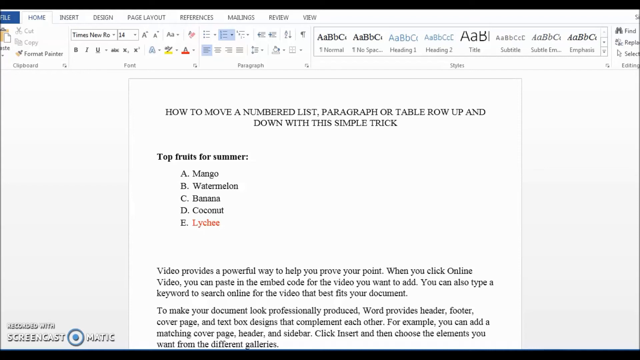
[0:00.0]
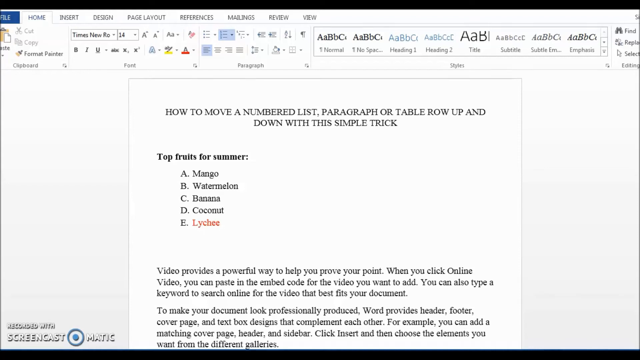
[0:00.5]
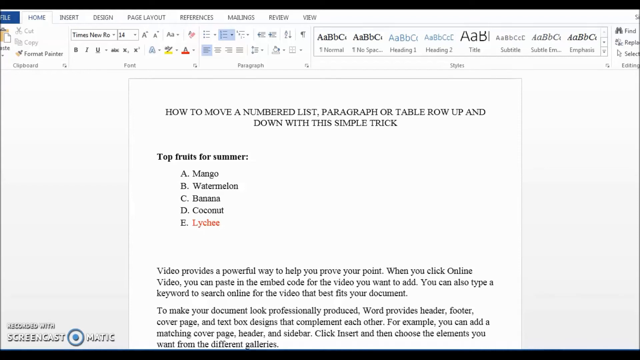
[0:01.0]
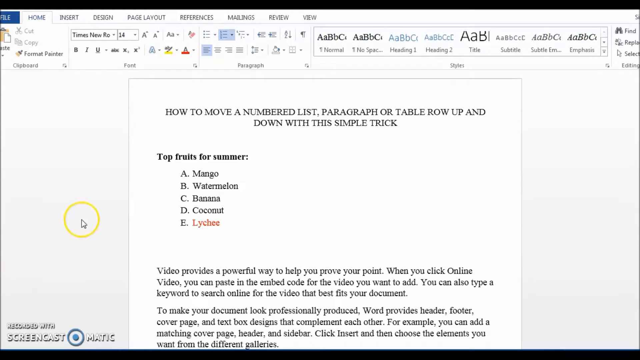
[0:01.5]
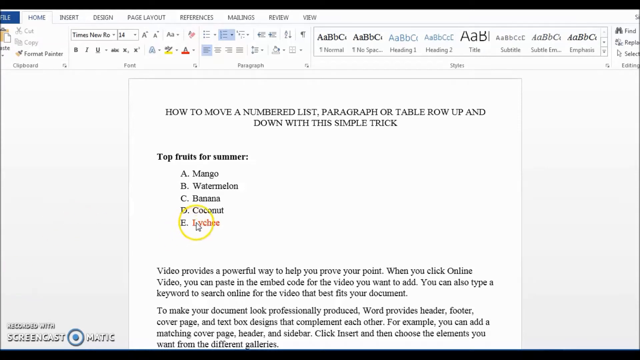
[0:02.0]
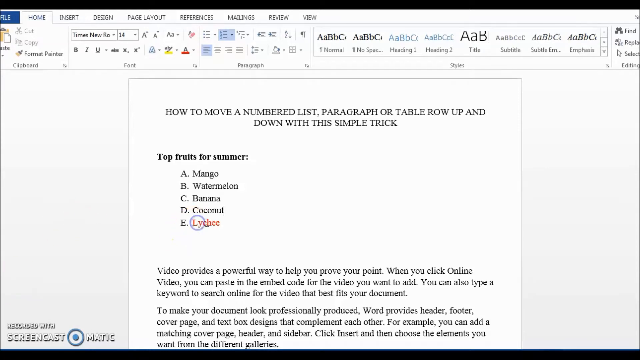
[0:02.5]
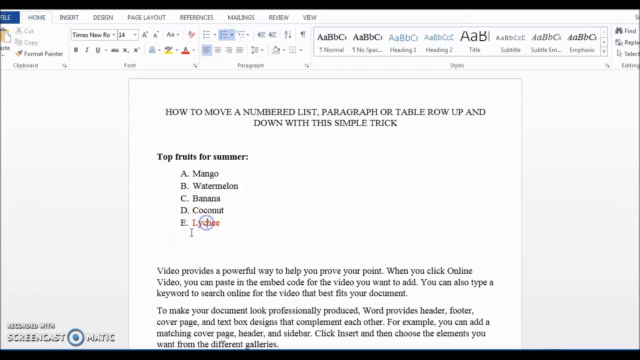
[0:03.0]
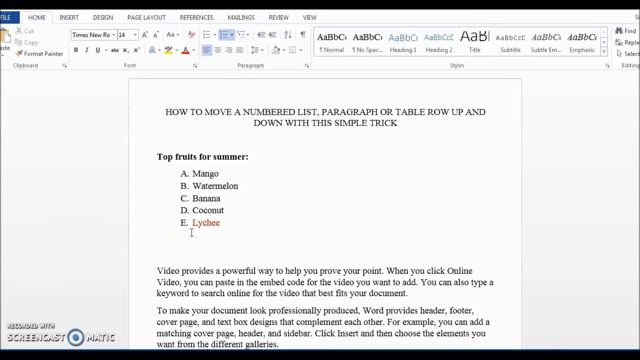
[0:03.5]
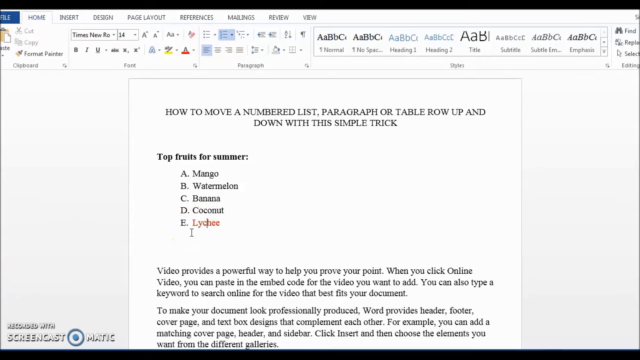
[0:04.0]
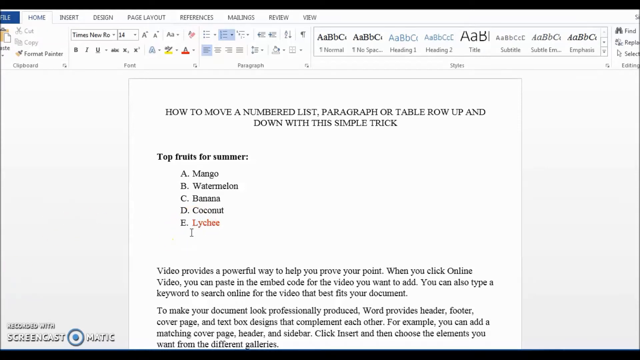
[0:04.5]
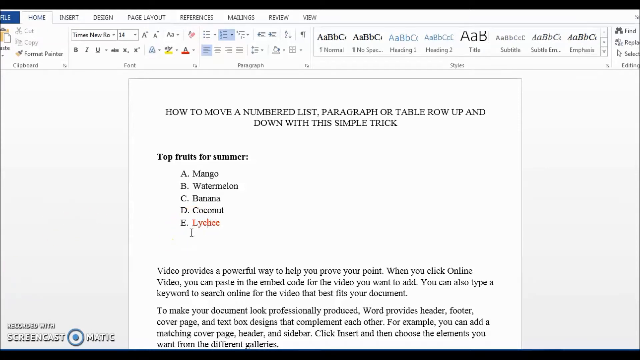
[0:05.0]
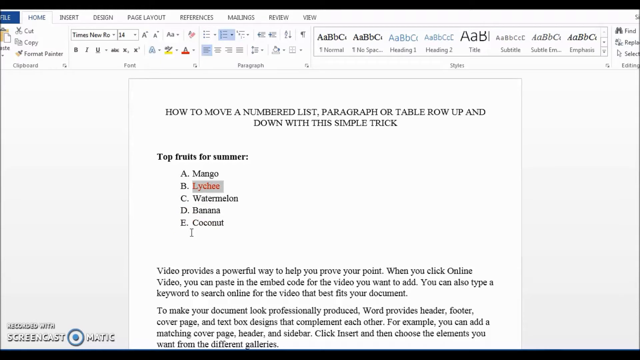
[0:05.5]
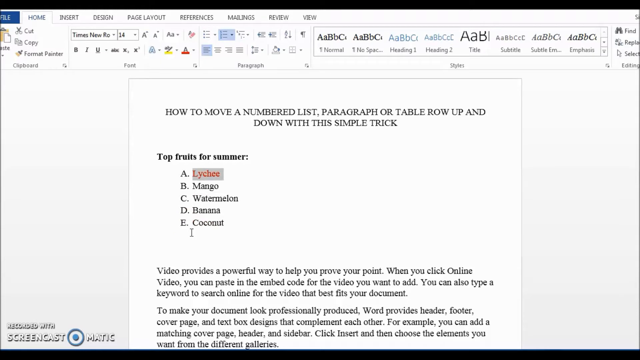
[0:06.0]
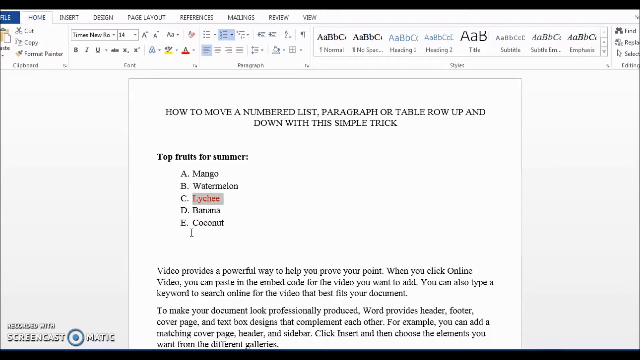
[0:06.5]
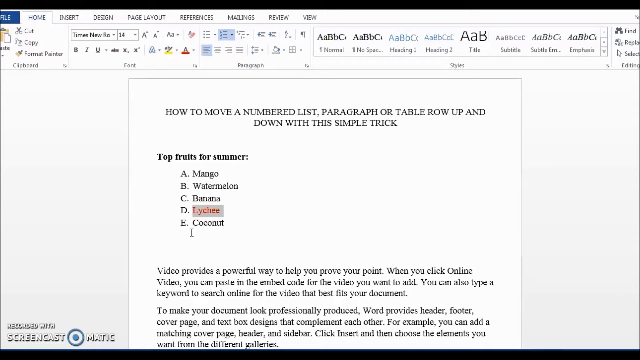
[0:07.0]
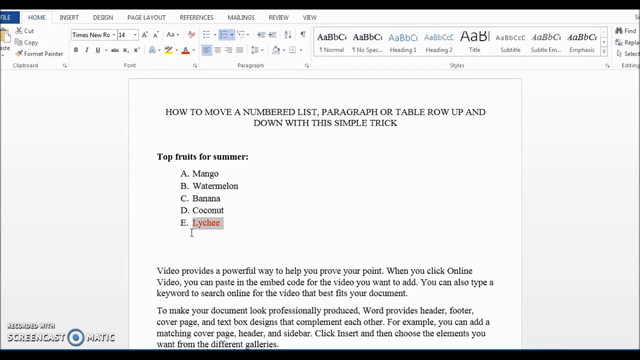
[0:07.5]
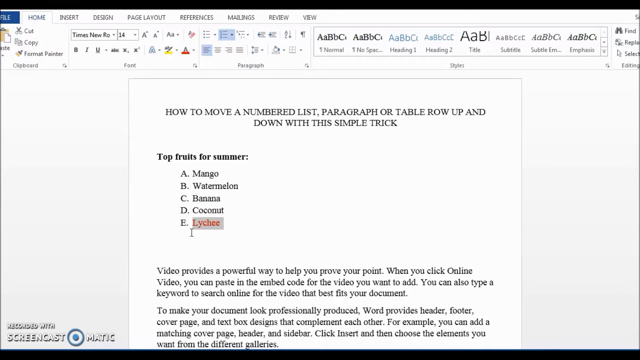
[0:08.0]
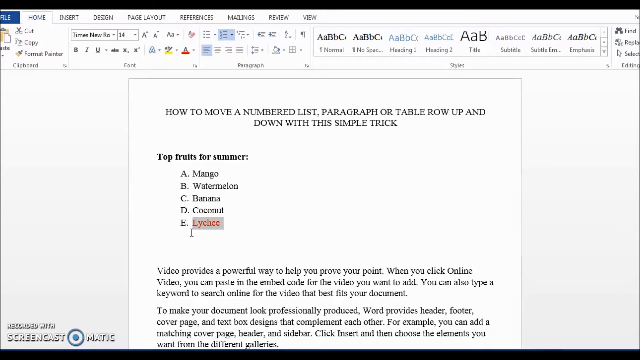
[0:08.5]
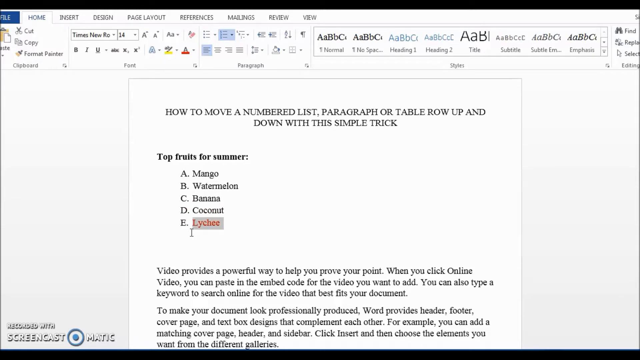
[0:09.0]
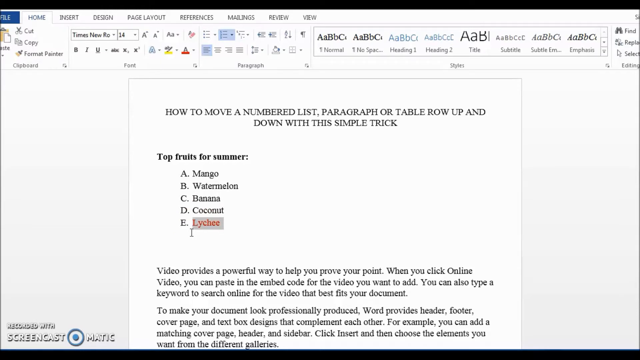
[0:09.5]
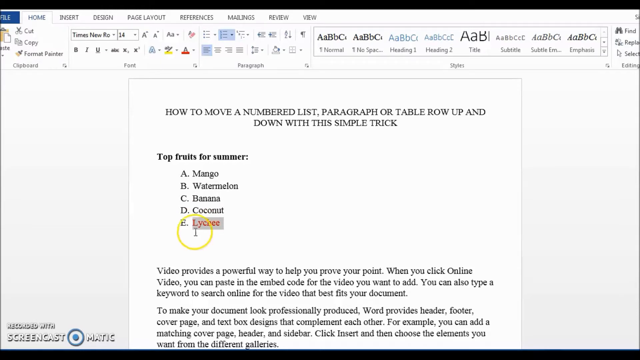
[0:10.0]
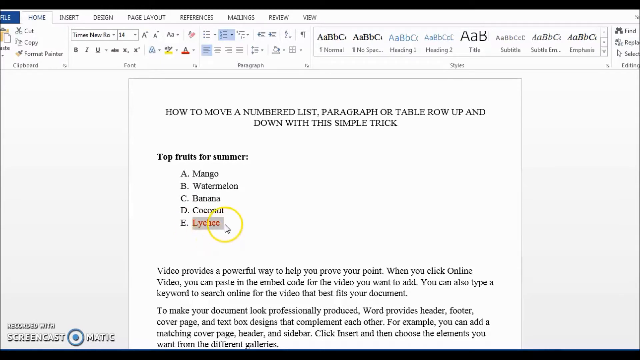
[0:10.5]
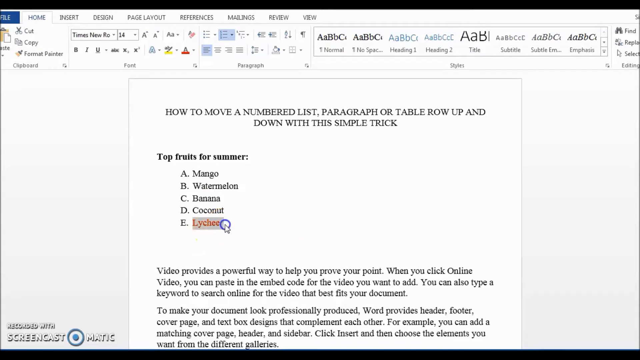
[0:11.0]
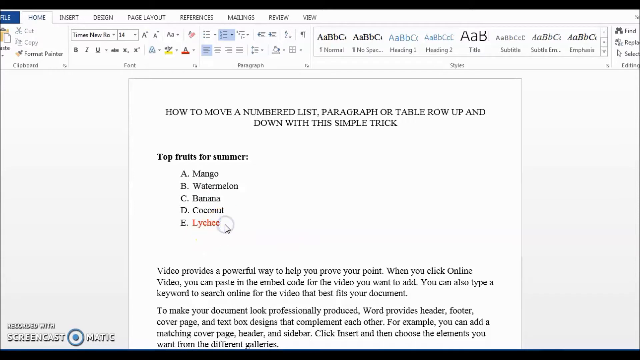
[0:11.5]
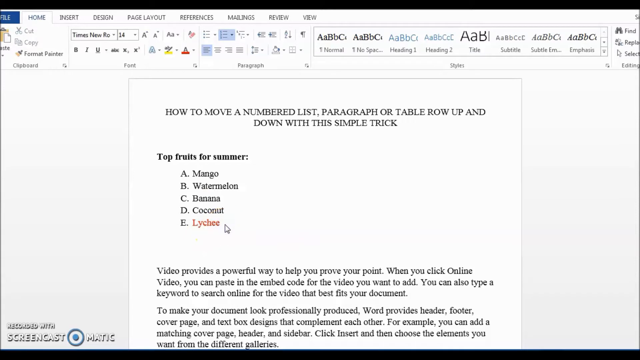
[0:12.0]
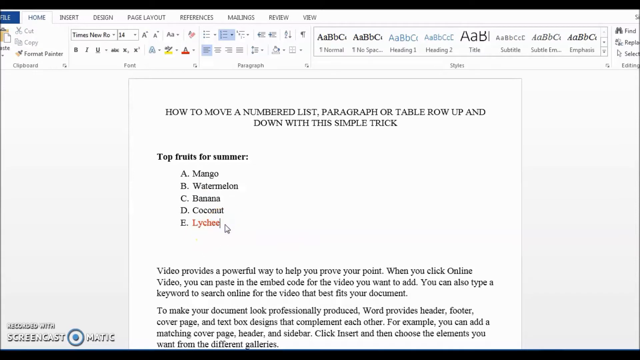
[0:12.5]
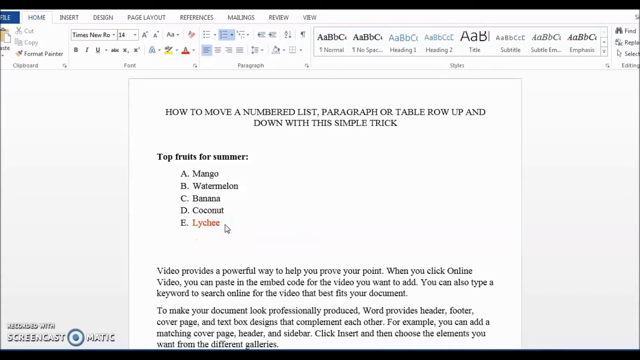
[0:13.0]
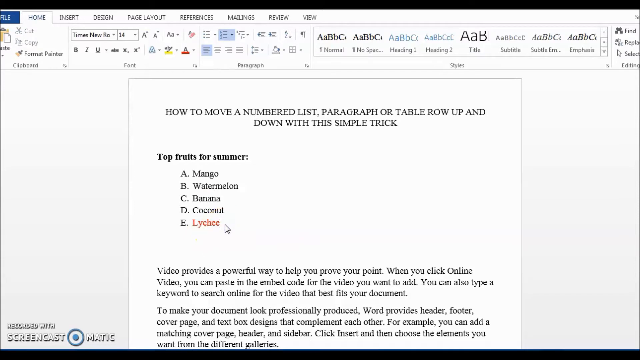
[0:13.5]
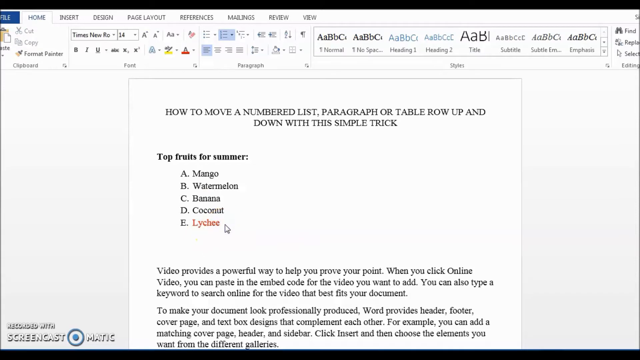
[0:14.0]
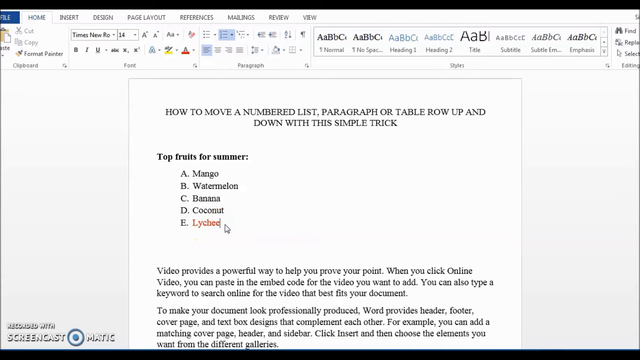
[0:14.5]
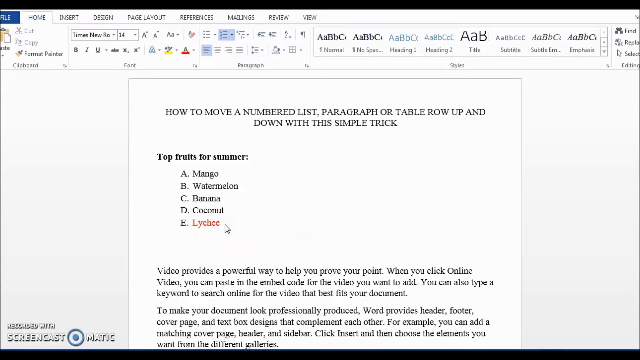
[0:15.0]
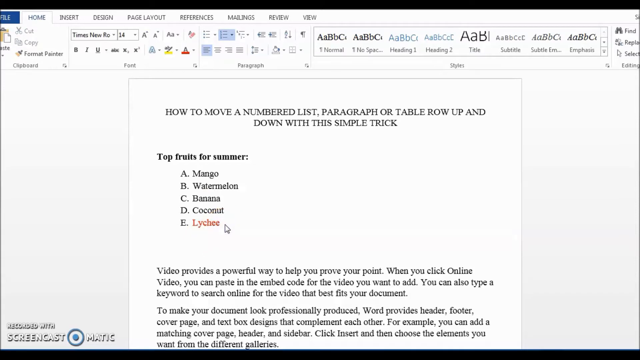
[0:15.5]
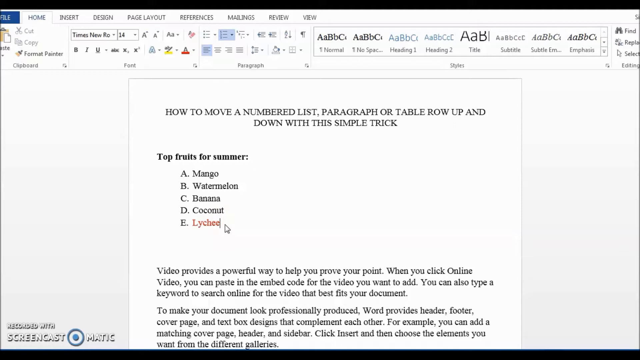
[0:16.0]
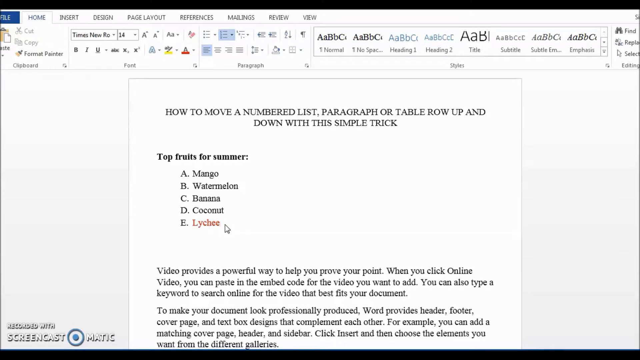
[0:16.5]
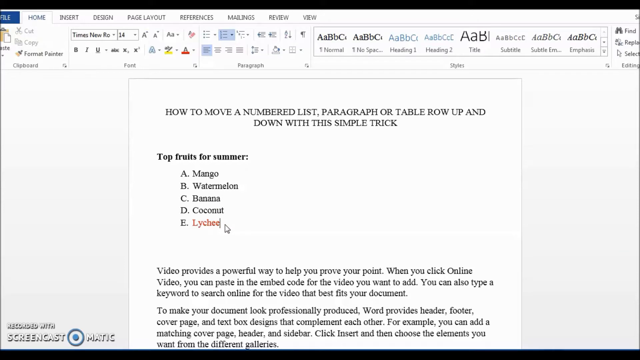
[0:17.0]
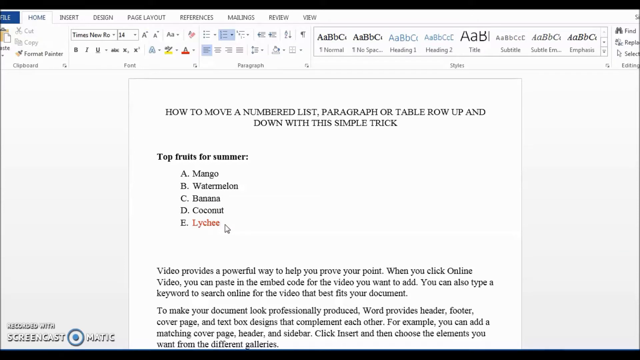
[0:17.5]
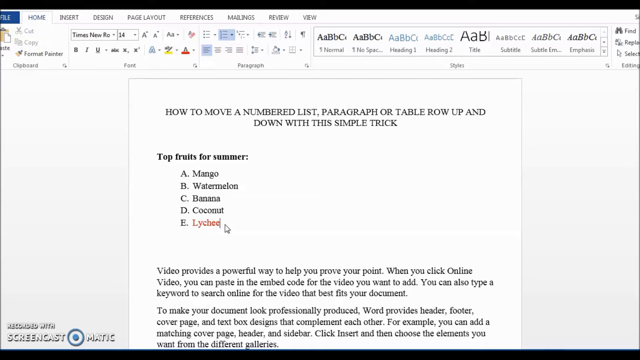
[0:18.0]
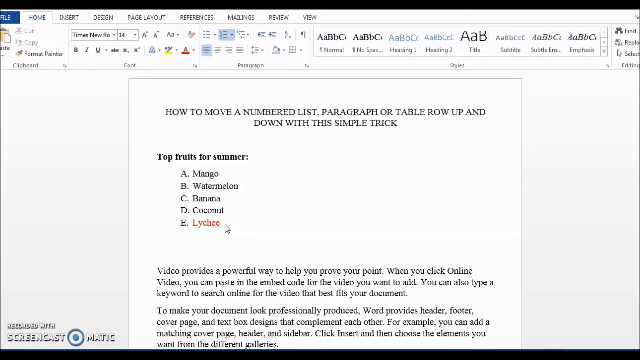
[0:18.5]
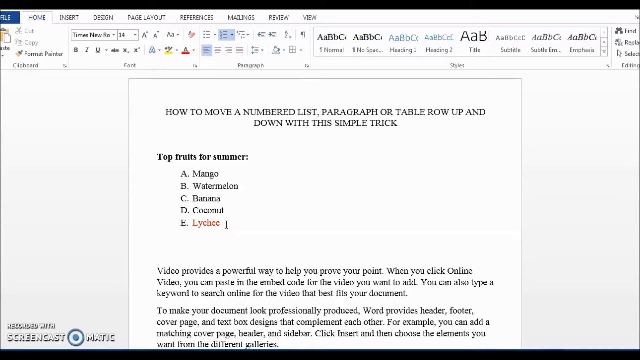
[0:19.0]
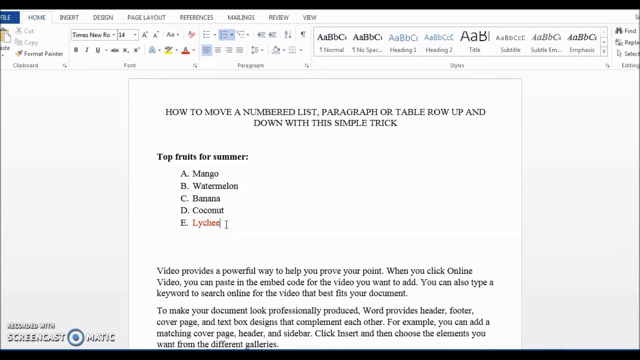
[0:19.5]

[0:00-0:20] A Word document, apparently, appears on screen with the title "How to move a numbered list, paragraph, or table row up and down with this simple trick." Someone seems to be describing the document. It is headed "Top fruits for summer" and lists "A mango, B watermelon, C banana, D coconut, E litchi." Below is a paragraph that reads "Video provides a powerful way to help you prove your point. When you click online video, you can paste in the embedded code for the video you want to add. You can also type a keyword to search online for the video that best fits your document," followed by "To make your document look professionally produced, Word provides header, footer, cover page and text box design that complement each other. For example, you can add a matching cover page."